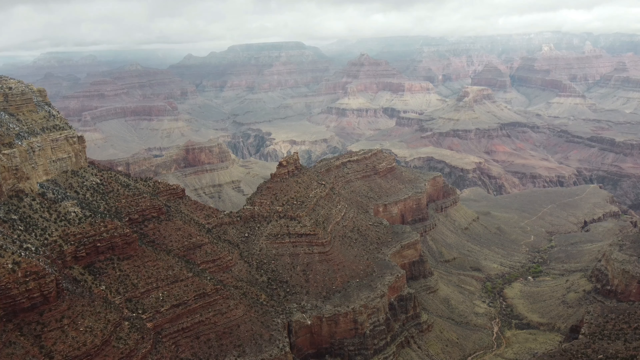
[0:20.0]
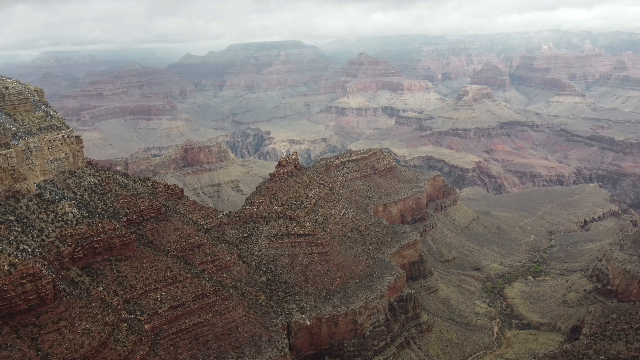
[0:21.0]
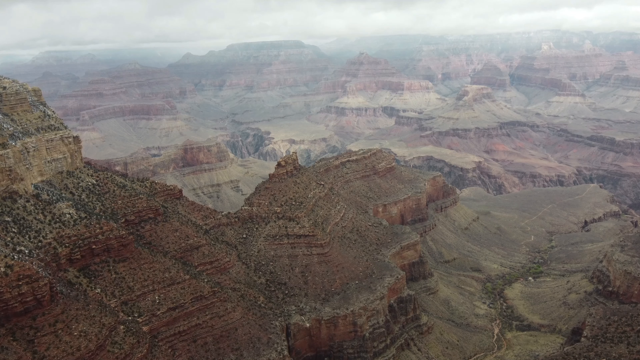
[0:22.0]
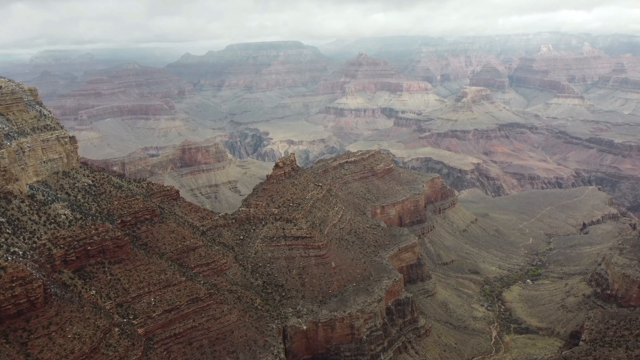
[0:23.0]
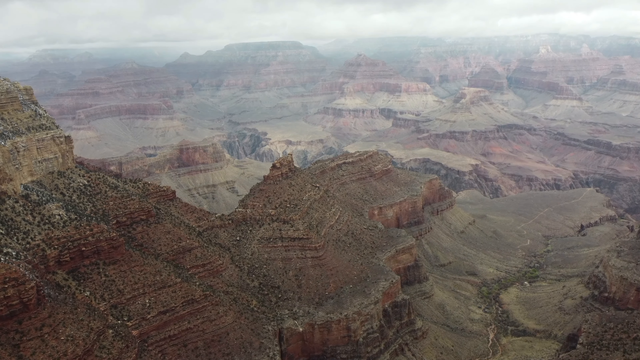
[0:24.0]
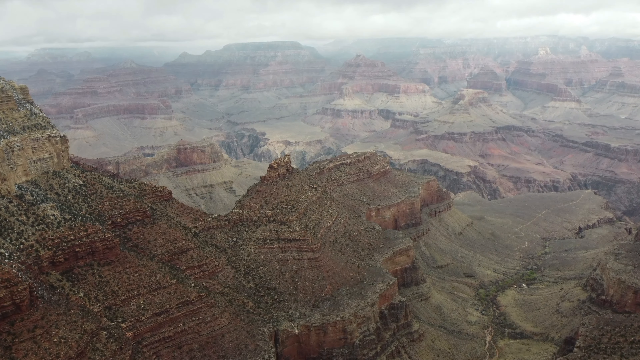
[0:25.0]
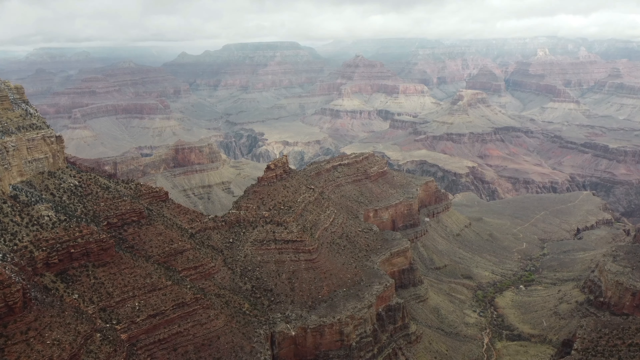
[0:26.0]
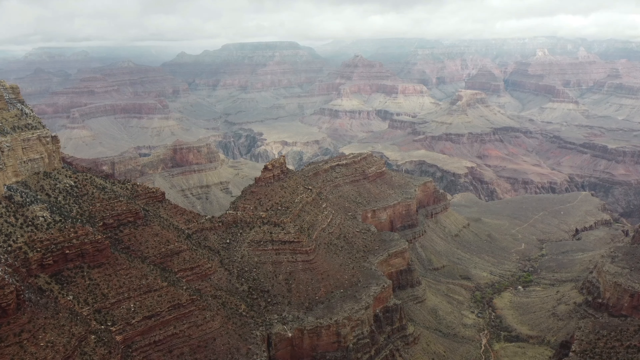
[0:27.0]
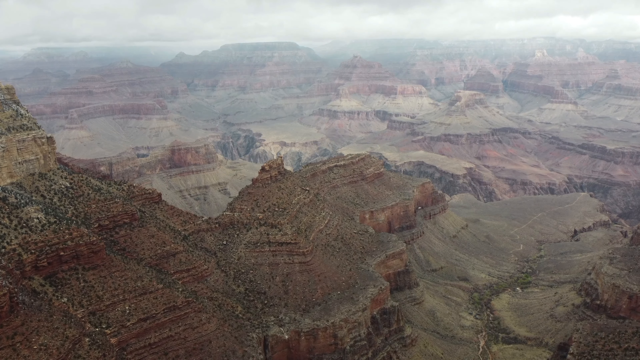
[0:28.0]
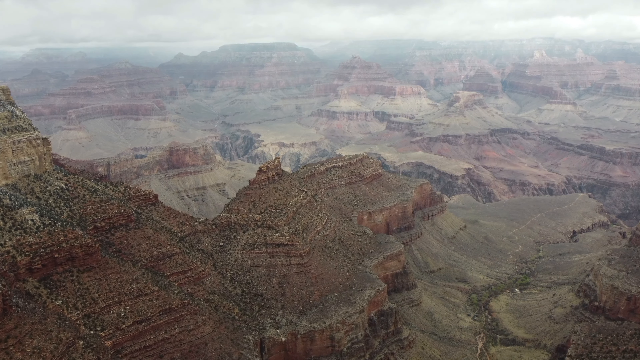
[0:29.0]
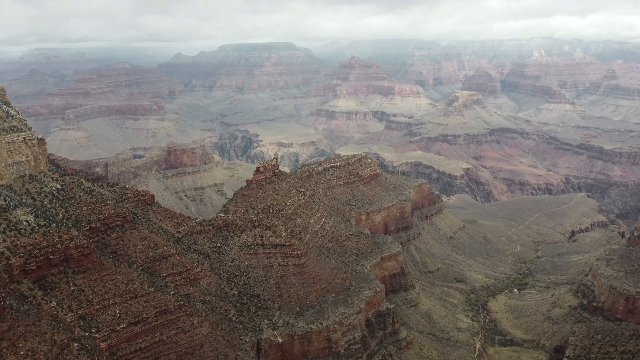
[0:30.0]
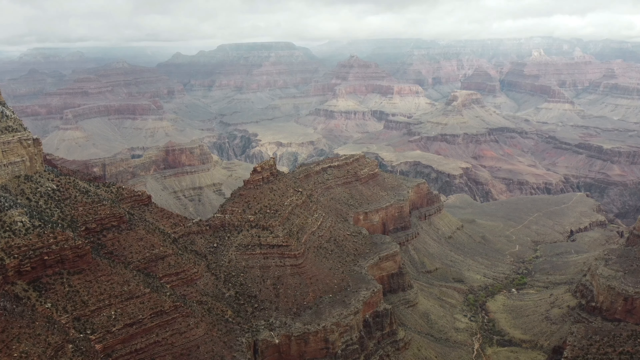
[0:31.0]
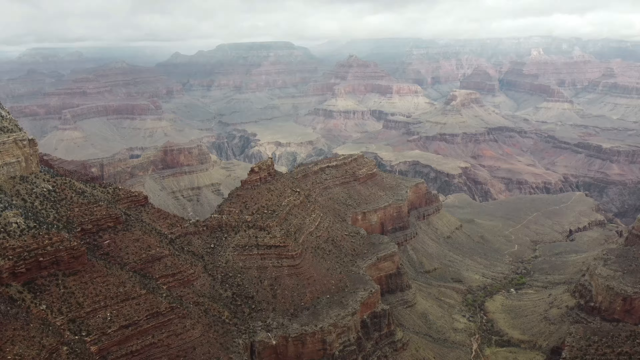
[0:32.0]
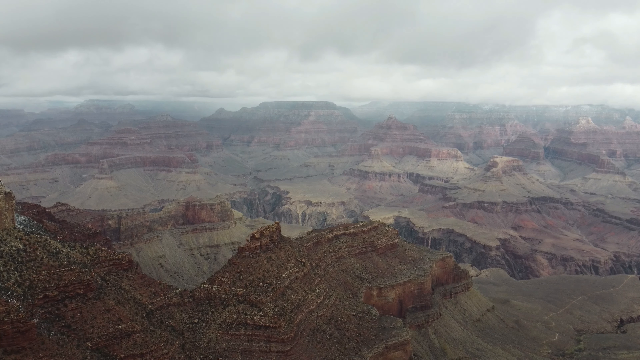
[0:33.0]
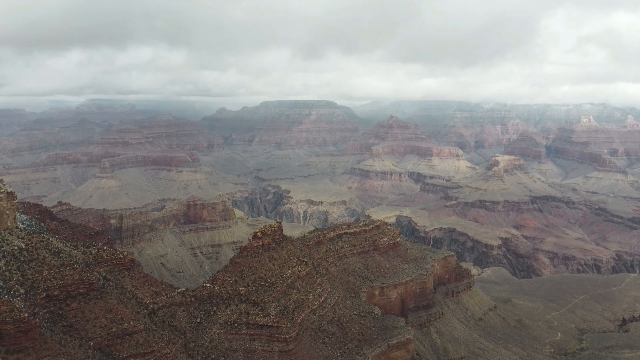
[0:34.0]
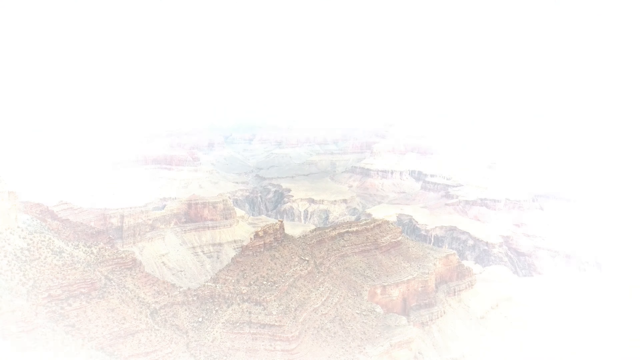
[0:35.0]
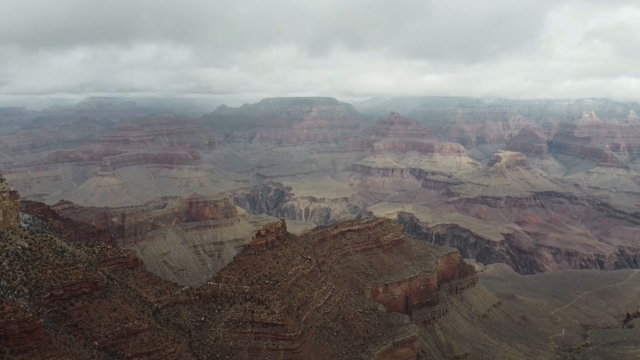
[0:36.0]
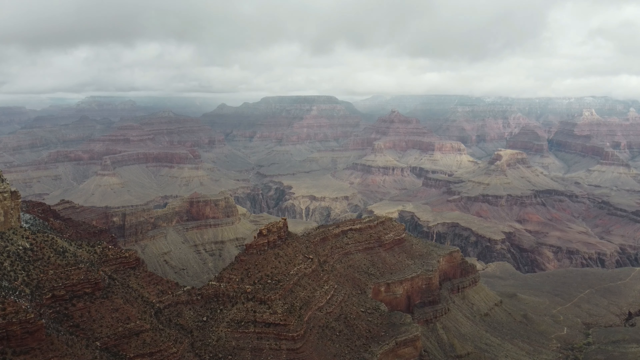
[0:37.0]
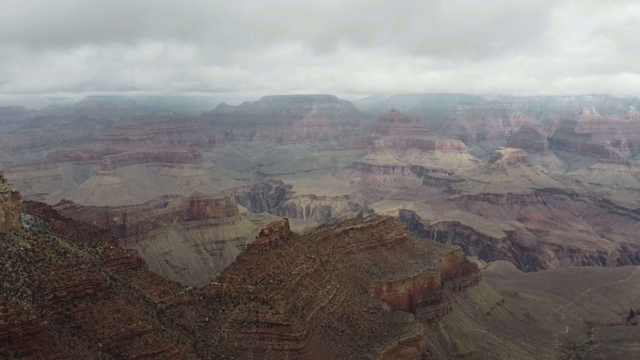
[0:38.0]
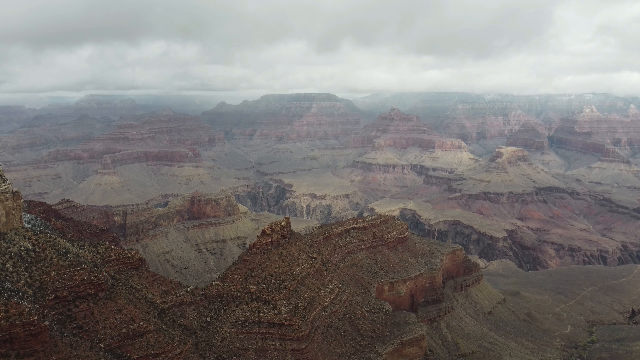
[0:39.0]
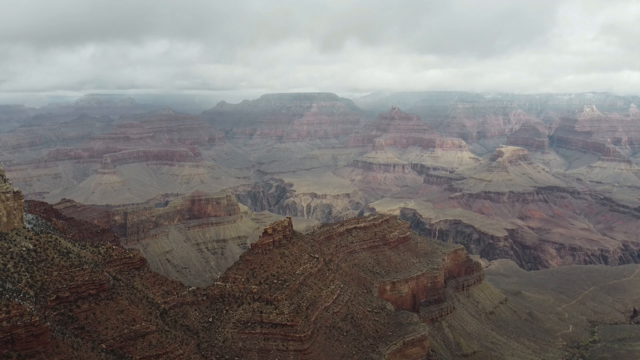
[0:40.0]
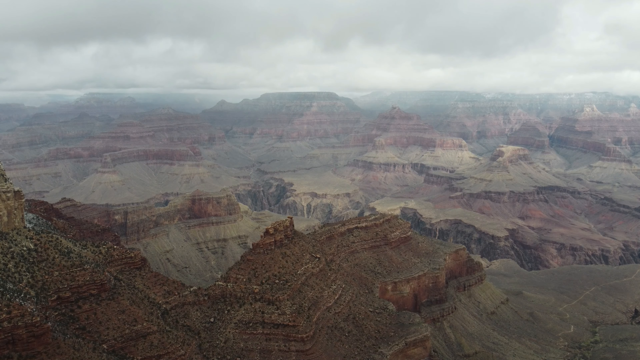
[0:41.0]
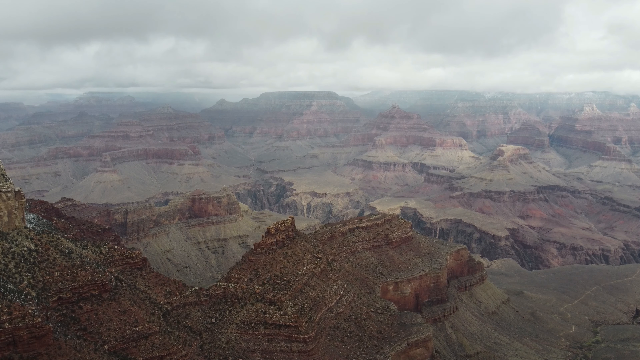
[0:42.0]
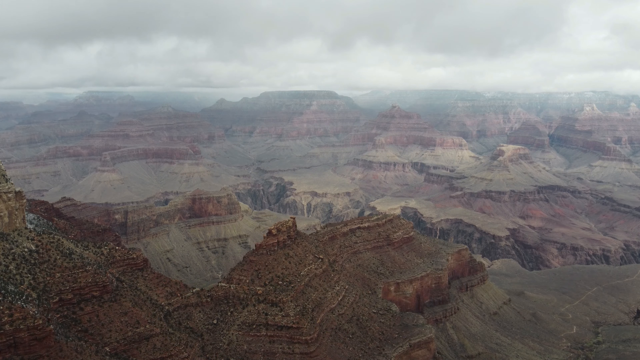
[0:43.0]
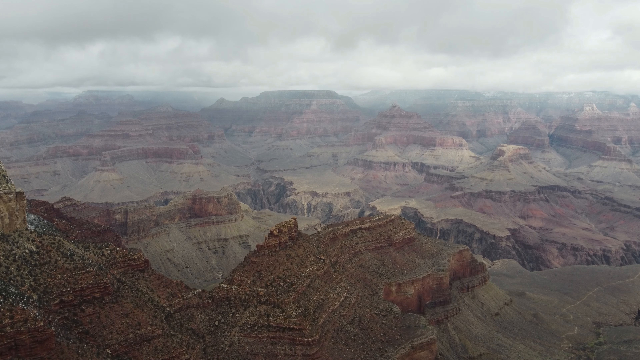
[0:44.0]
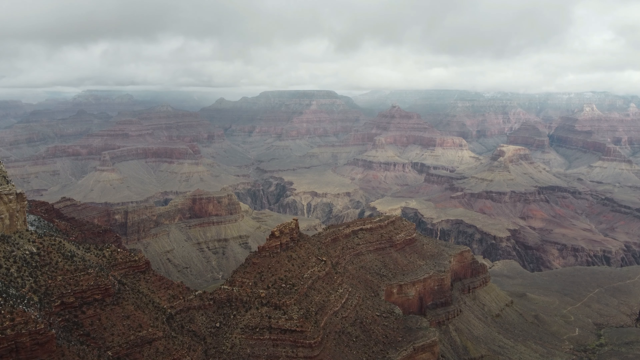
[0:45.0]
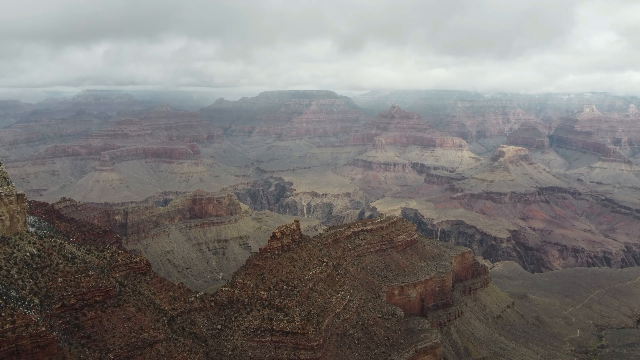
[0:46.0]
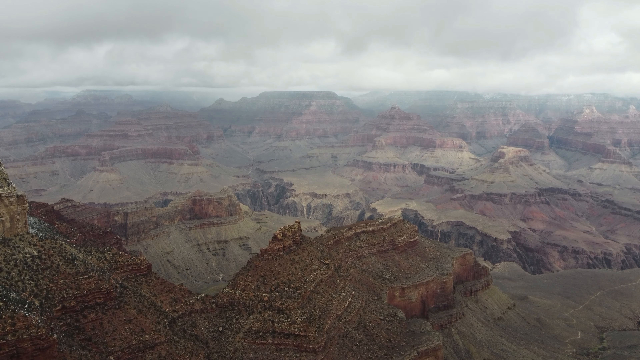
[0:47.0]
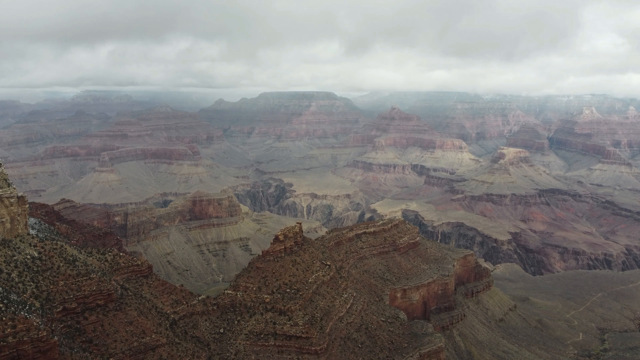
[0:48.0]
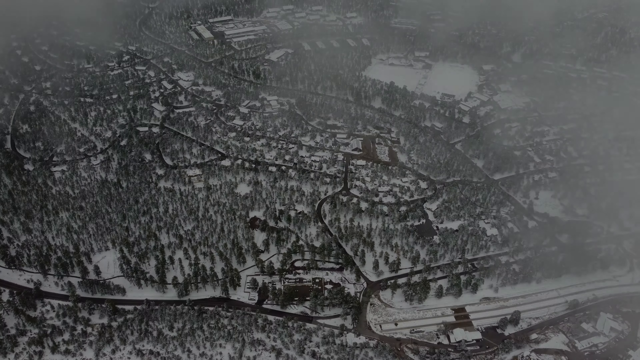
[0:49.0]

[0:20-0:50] A top-view shot of the Grand Canyon shows what looks like 18 visible mountaintops, while what looks like snow or white particles is brushed by wind and flies to the right side of the screen. The camera moves slowly forward and to the right, revealing more views of the Grand Canyon as more white particles come onto the camera. Another view from the top of a mountaintop shows what looks like the opening of the Grand Canyon. After a bright flash, the shot returns to the Grand Canyon, with clouds moving to the right where the wind is blowing, and the camera rises higher. The video then cuts to a scene of what looks like the Grand Canyon.